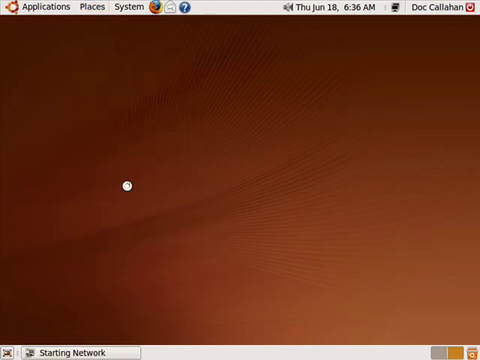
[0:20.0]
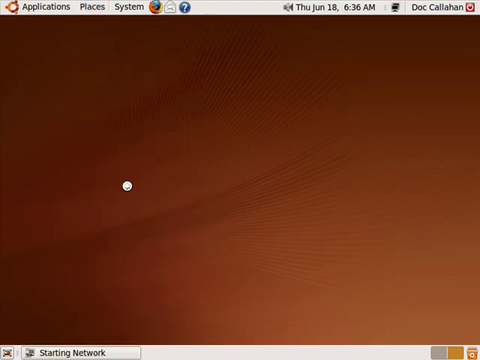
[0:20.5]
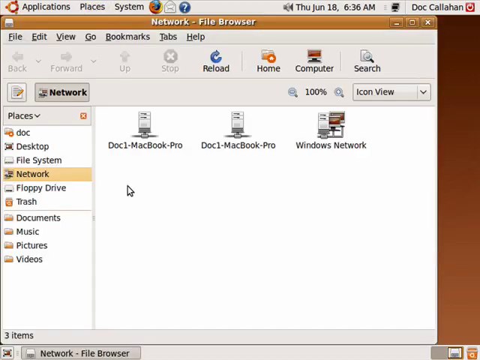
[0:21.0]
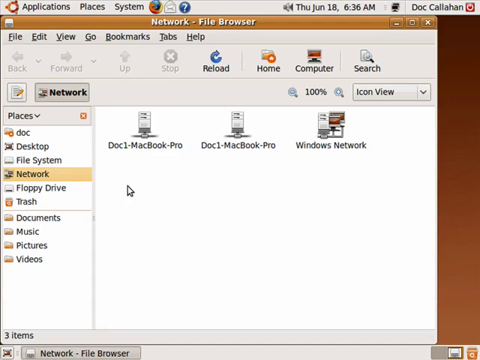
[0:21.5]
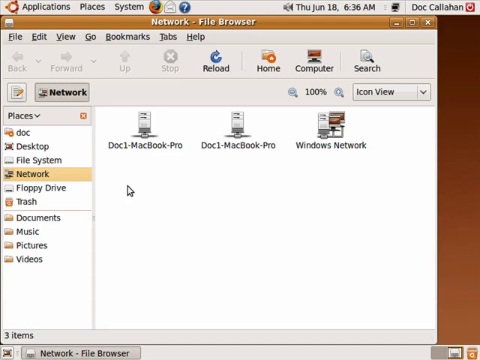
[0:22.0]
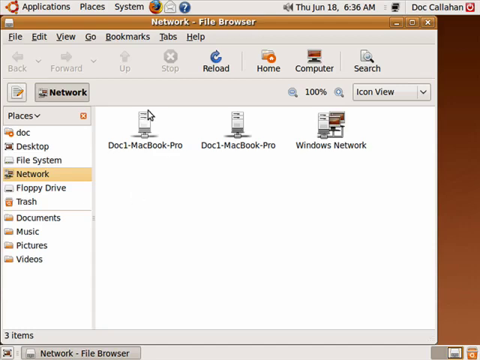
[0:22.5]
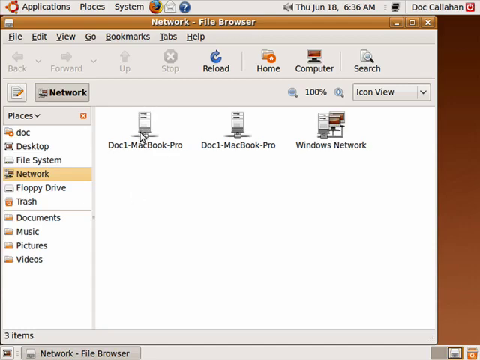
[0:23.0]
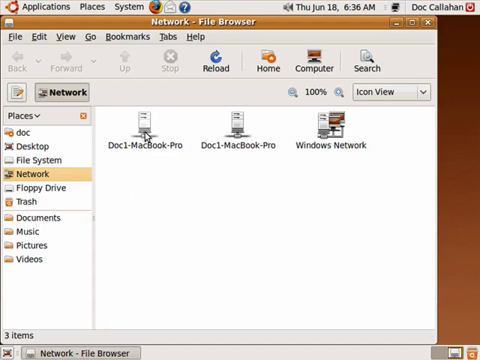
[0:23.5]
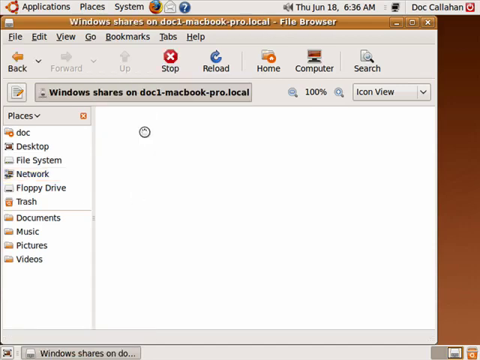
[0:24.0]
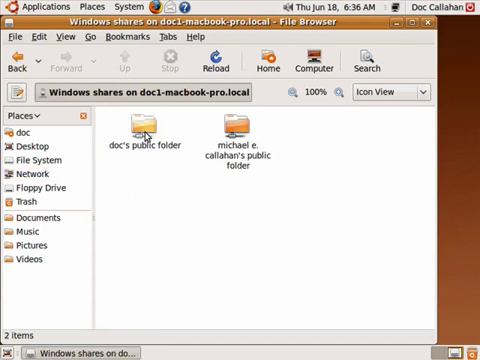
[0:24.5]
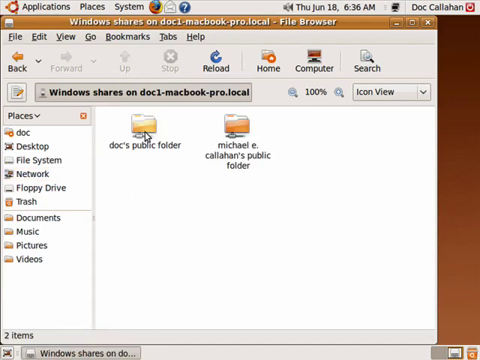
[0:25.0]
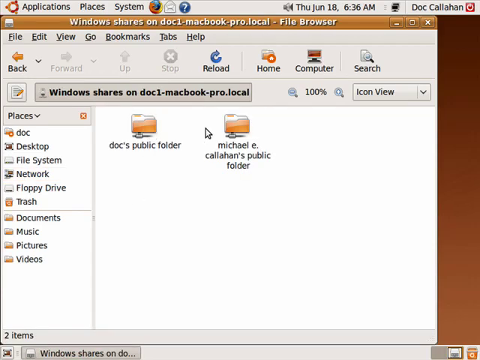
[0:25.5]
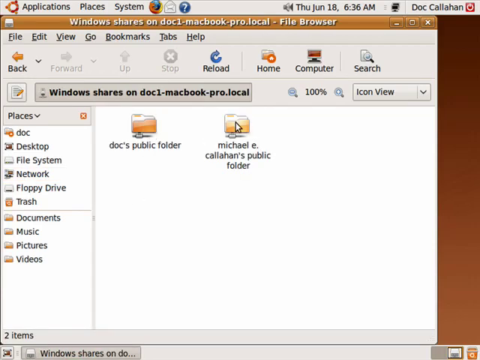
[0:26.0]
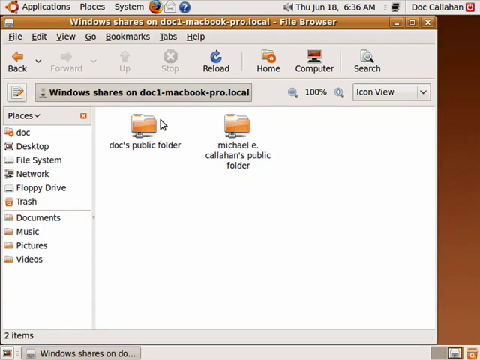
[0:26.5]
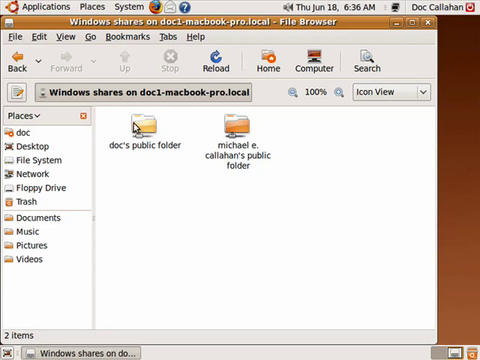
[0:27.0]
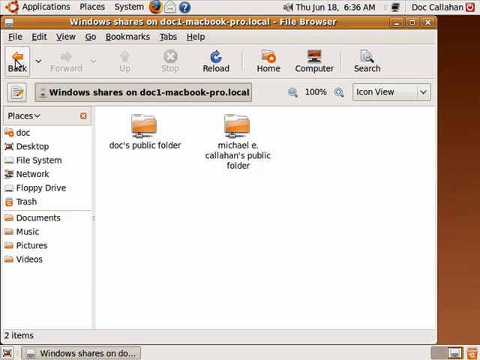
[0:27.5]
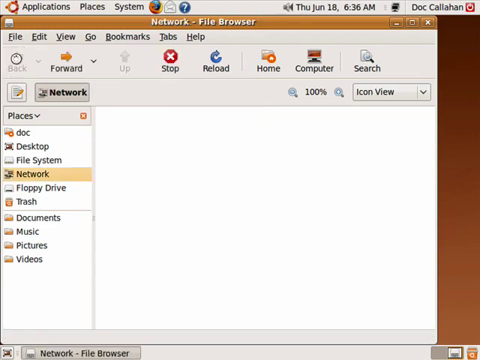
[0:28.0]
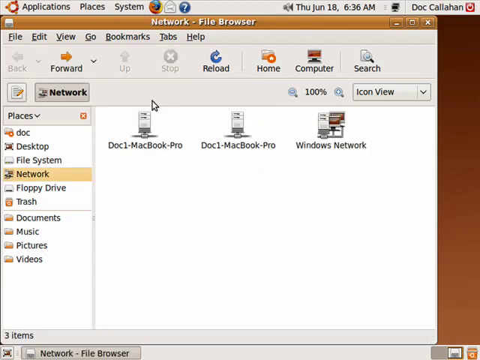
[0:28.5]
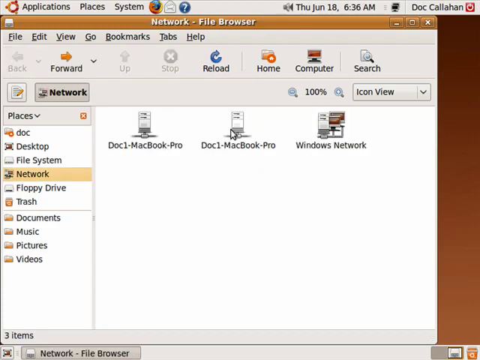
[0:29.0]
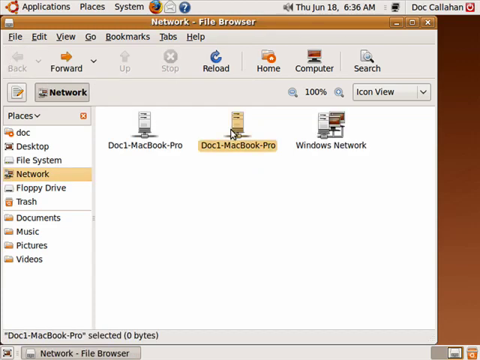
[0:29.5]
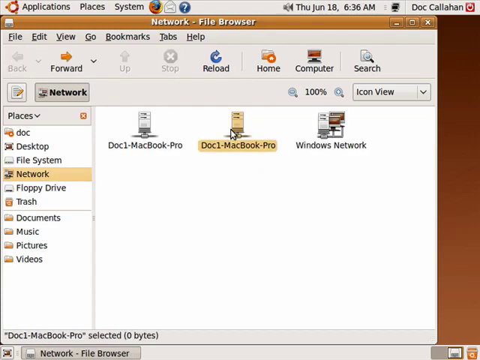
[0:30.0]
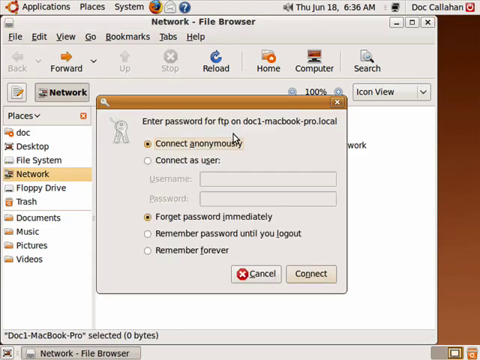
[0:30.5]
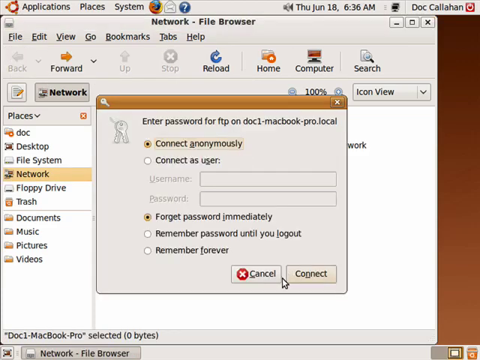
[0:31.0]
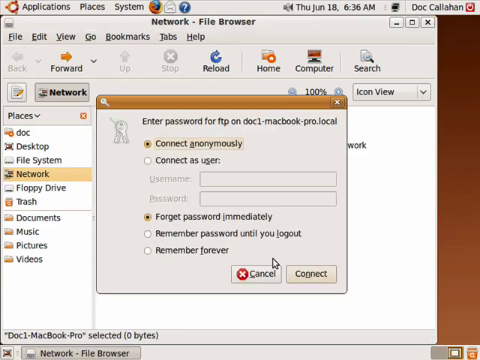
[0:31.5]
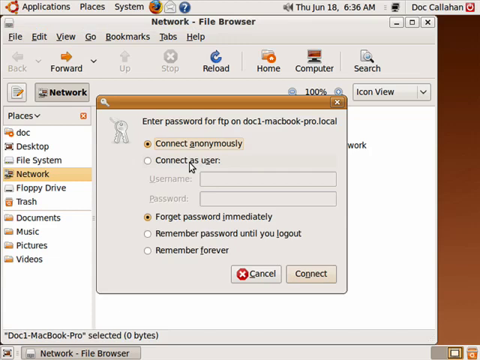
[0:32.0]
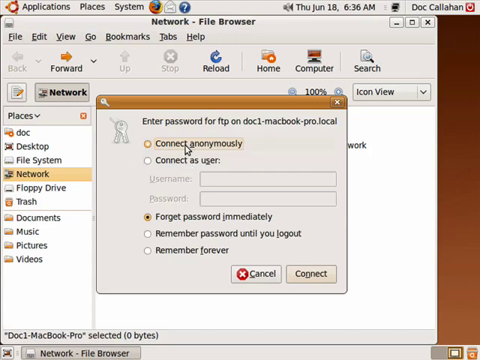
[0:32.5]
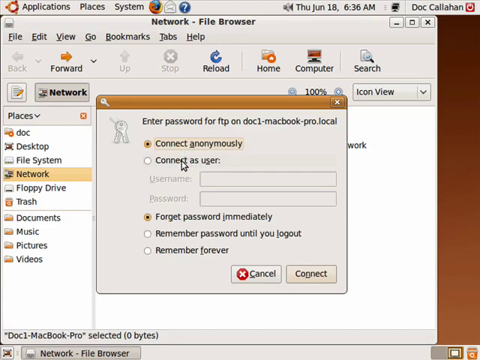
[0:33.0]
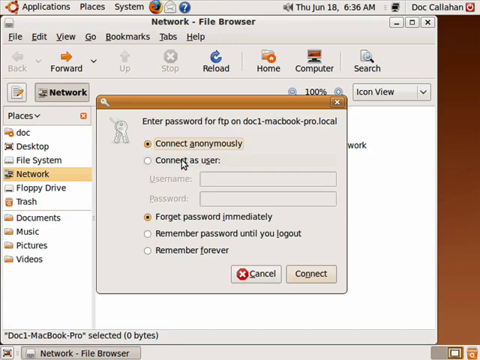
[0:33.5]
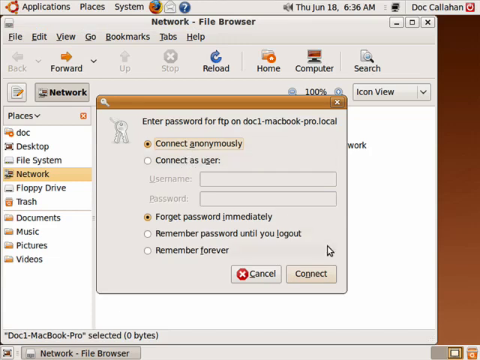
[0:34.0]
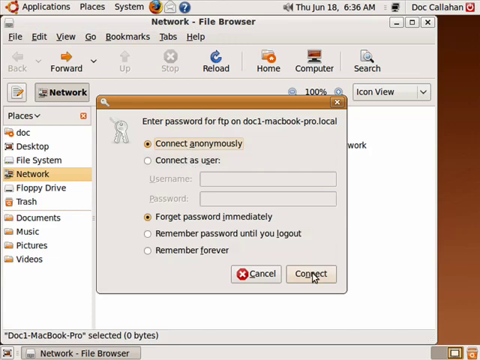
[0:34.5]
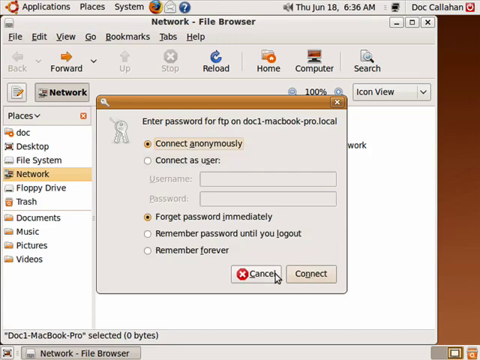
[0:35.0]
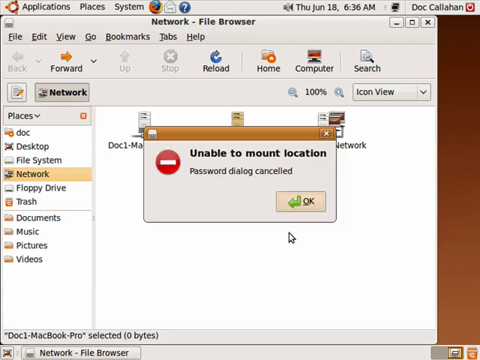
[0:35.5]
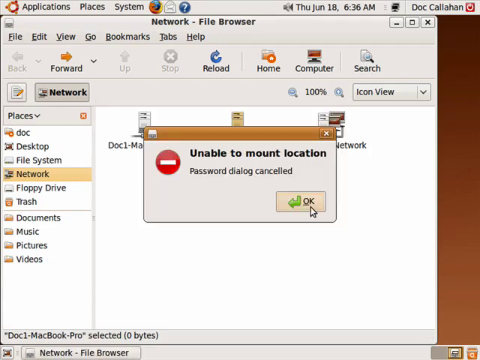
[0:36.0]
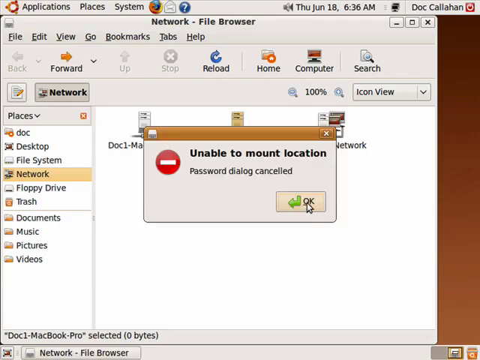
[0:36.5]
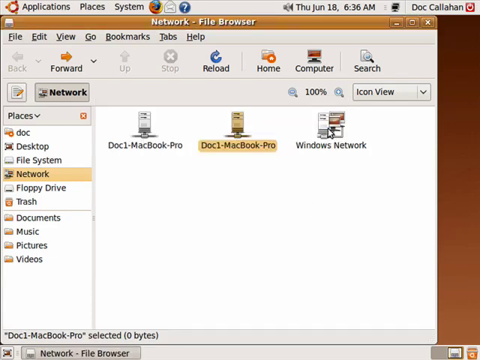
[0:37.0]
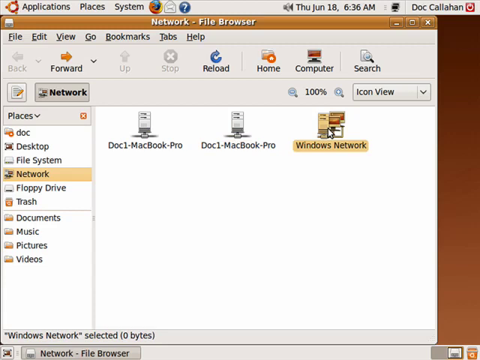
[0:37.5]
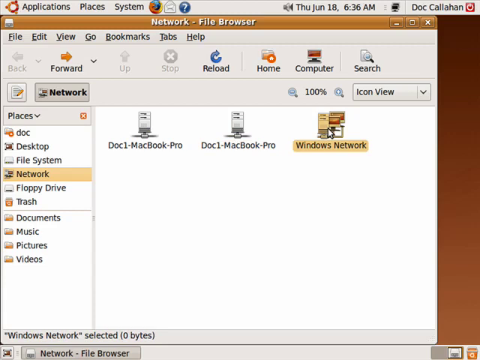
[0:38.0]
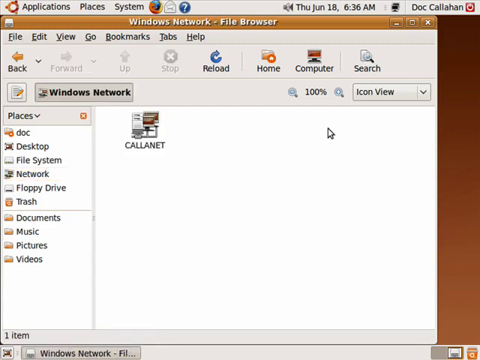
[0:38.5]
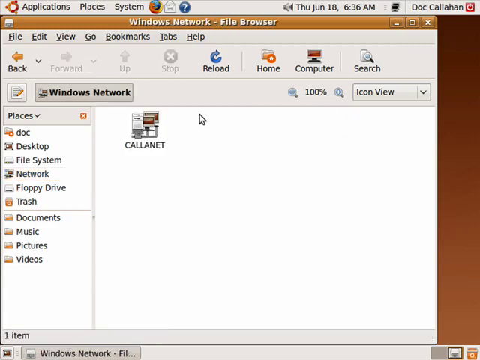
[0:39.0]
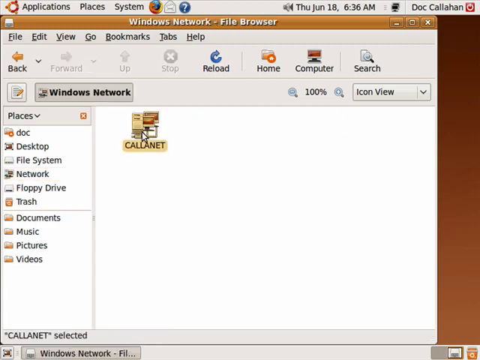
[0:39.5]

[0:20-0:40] The operating system browser is opened and the MacBook Pro icon is clicked, revealing several icons. The step-by-step process of connecting anonymously to set up a network is shown, demonstrating how to log in to the KalasNet network. It then shows how to access the public documents area, how it is stored, and how security is set up for use anonymously or as an end user.